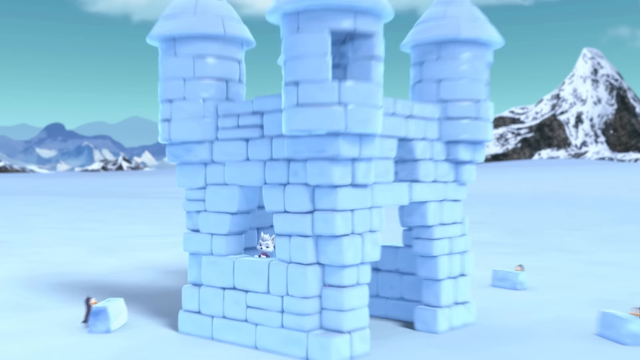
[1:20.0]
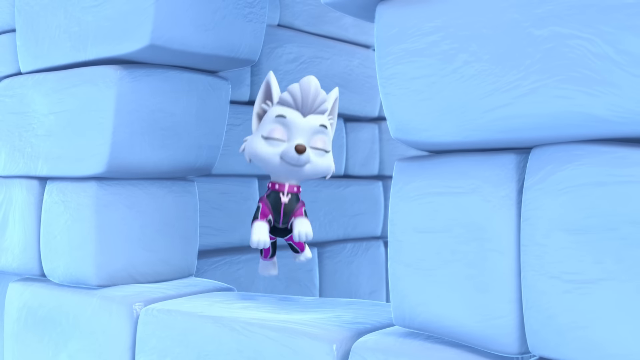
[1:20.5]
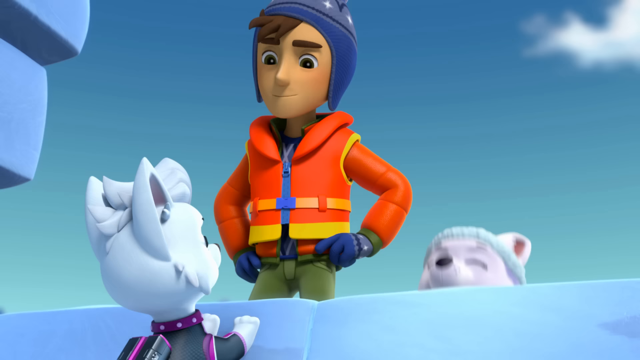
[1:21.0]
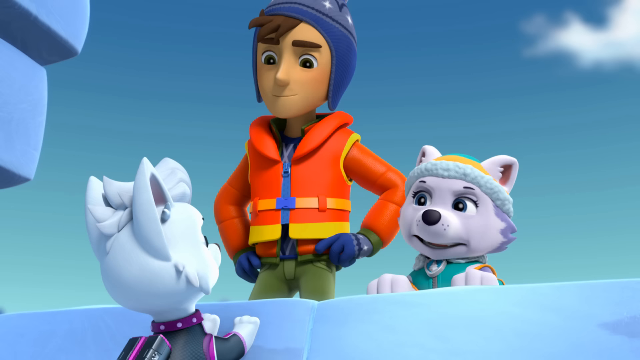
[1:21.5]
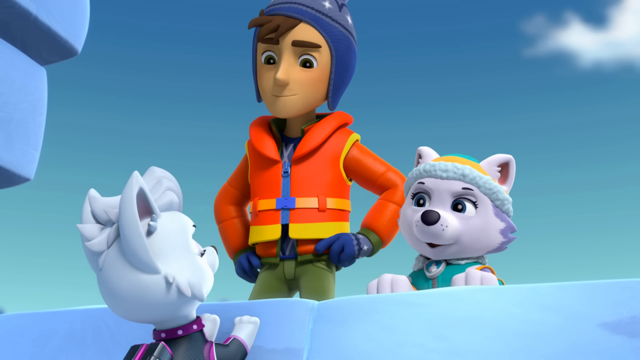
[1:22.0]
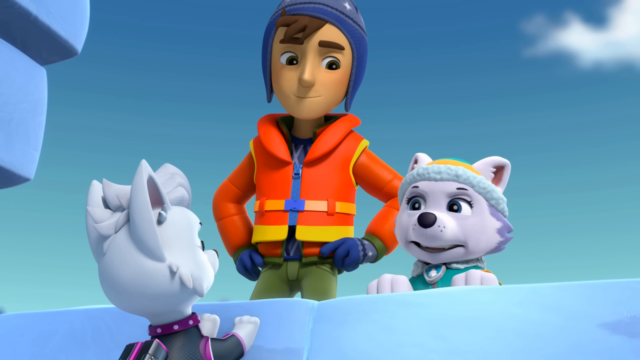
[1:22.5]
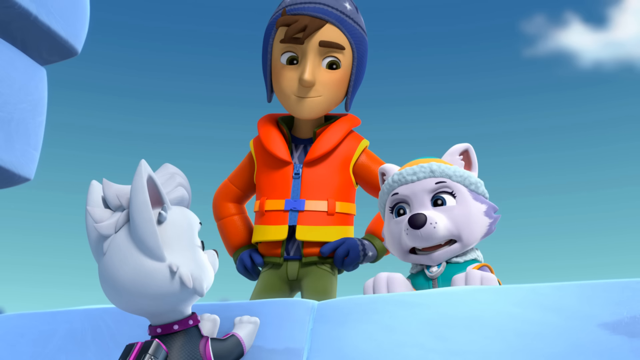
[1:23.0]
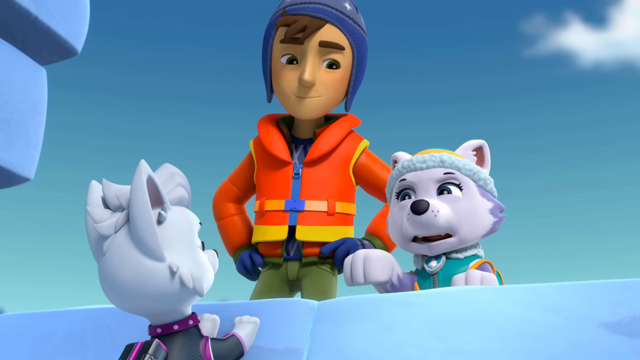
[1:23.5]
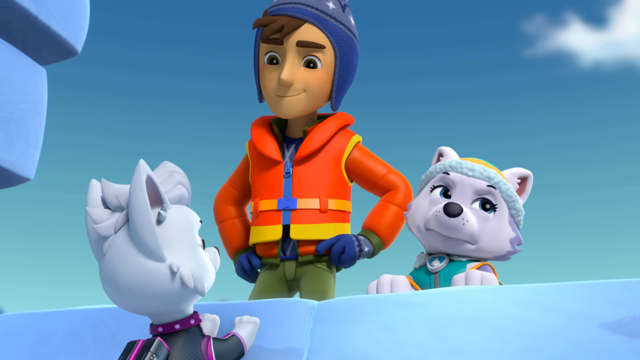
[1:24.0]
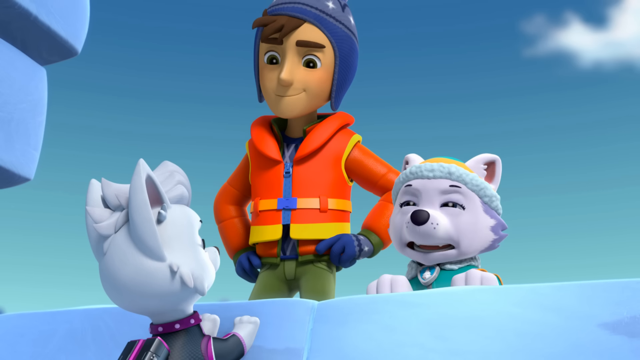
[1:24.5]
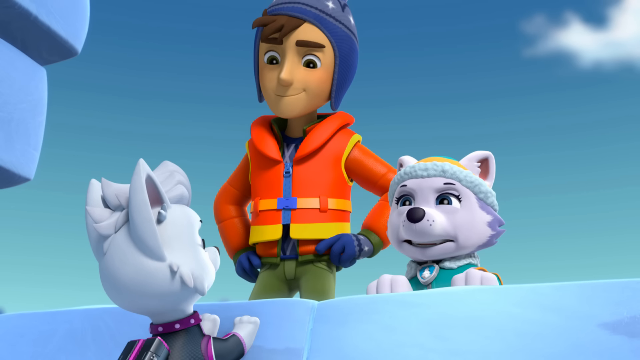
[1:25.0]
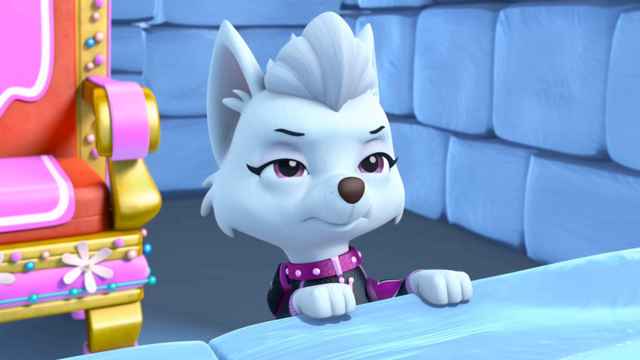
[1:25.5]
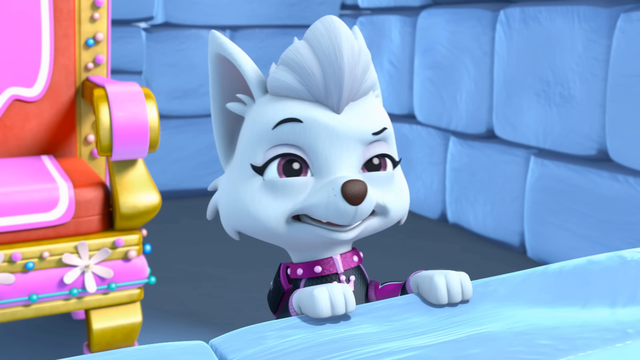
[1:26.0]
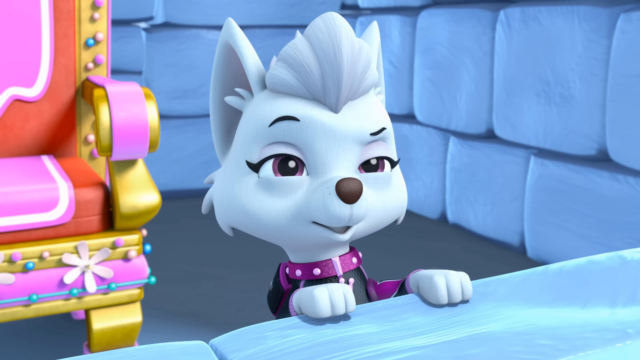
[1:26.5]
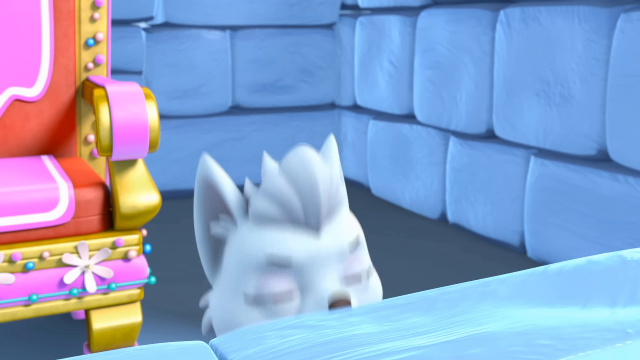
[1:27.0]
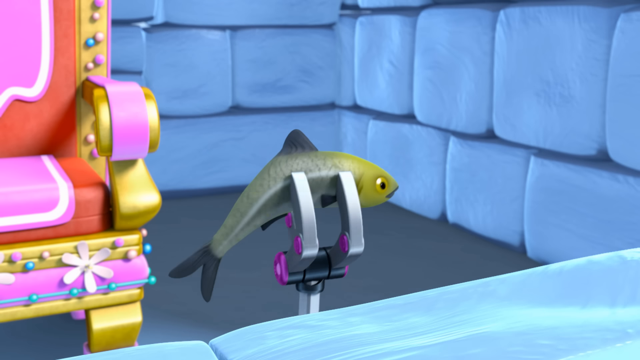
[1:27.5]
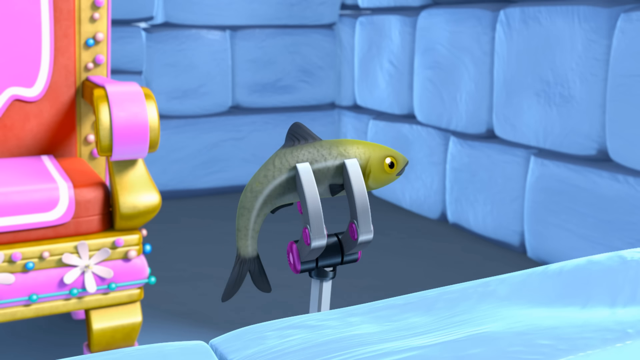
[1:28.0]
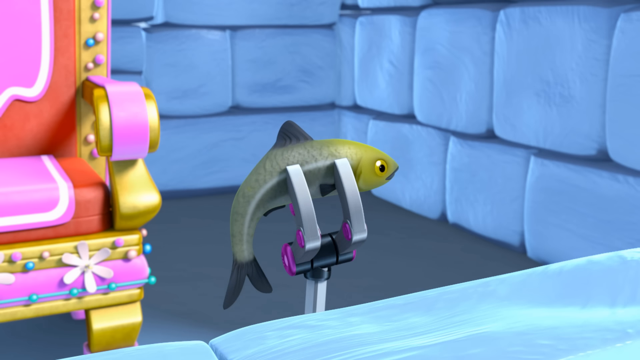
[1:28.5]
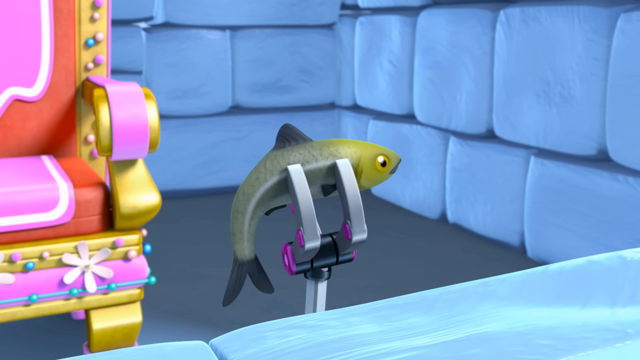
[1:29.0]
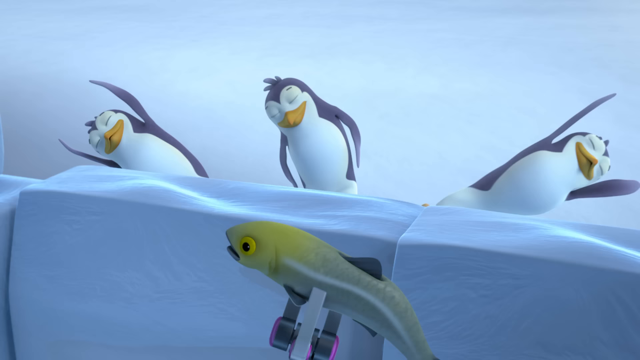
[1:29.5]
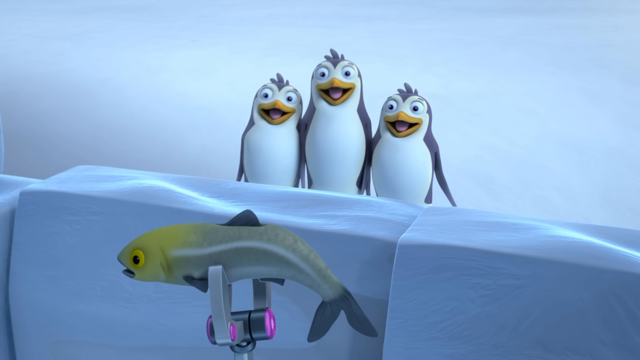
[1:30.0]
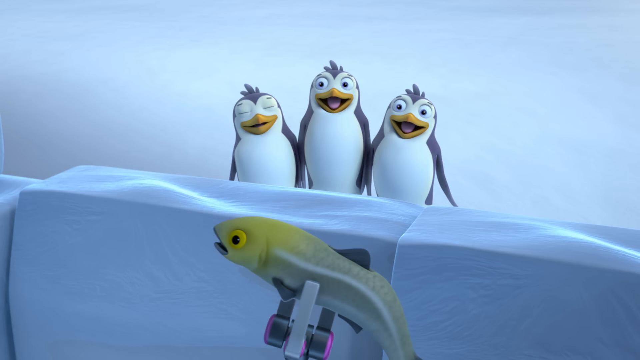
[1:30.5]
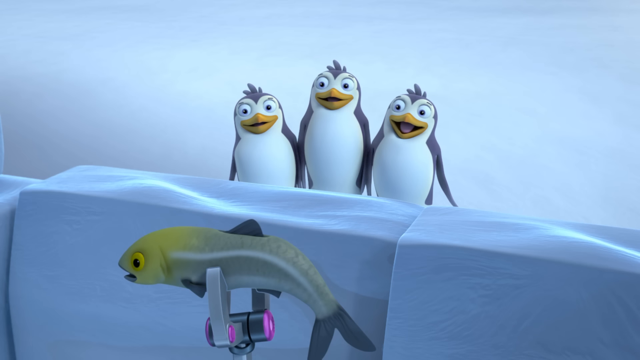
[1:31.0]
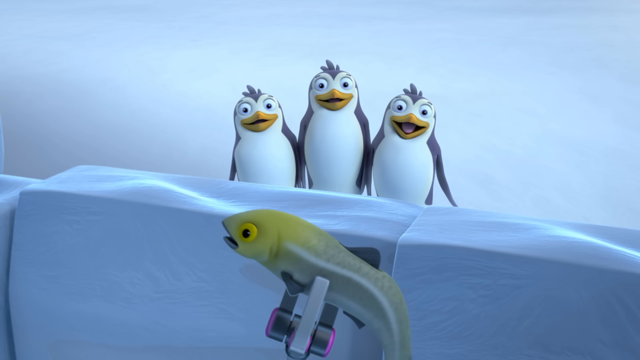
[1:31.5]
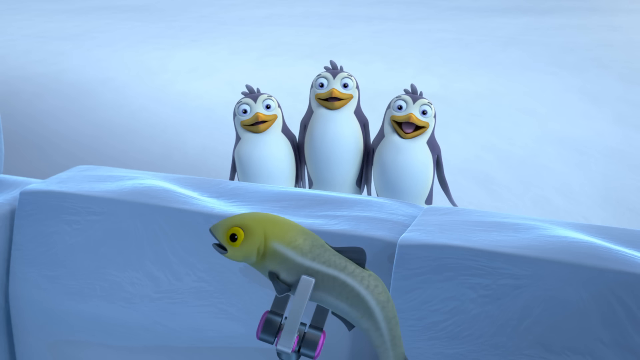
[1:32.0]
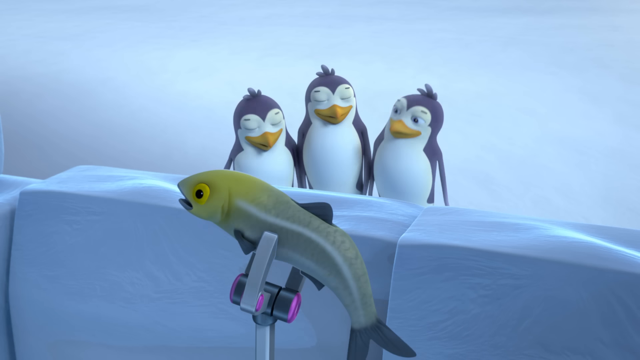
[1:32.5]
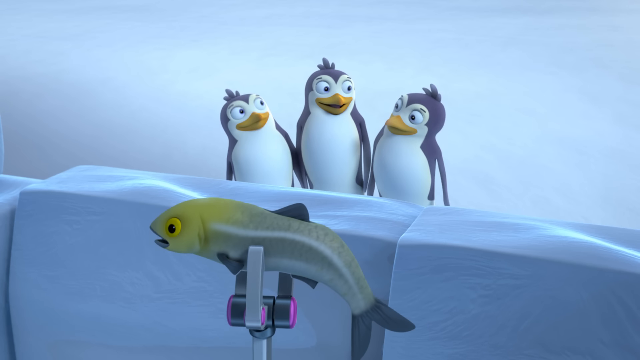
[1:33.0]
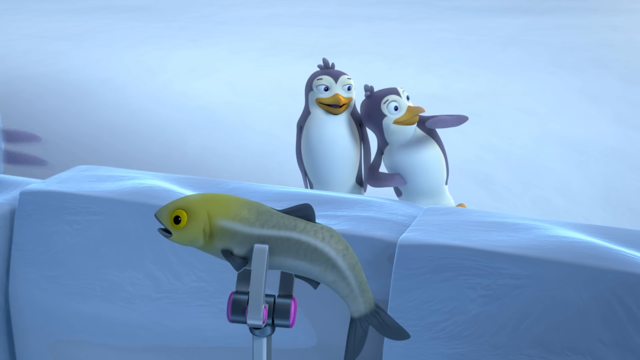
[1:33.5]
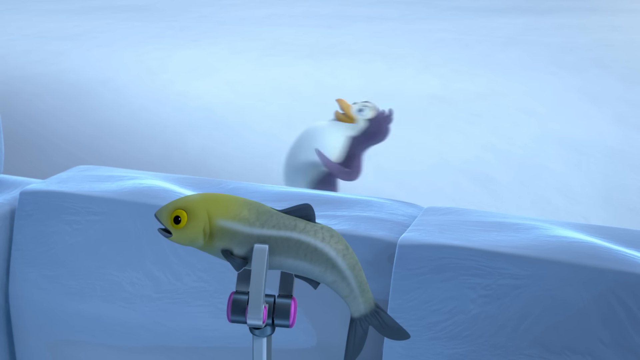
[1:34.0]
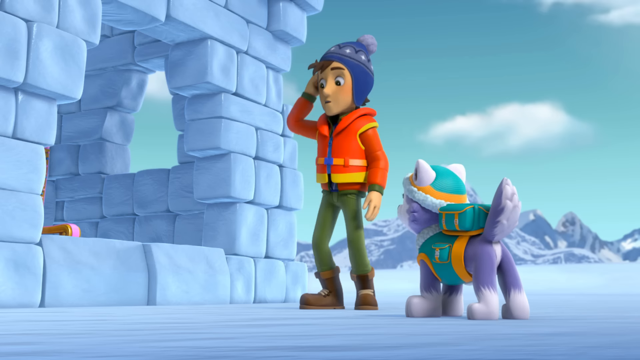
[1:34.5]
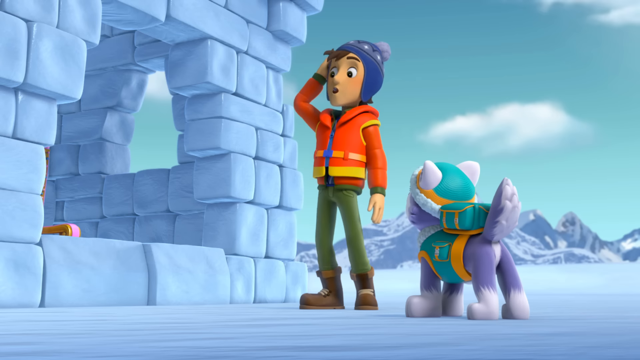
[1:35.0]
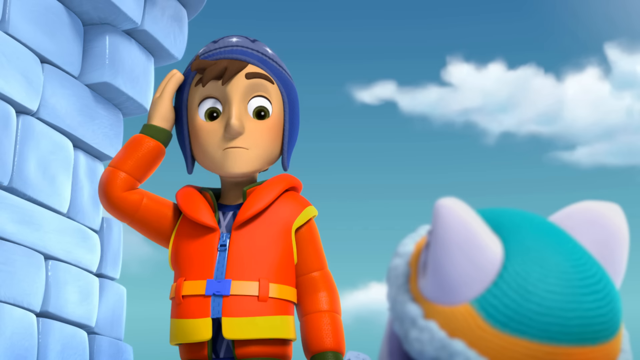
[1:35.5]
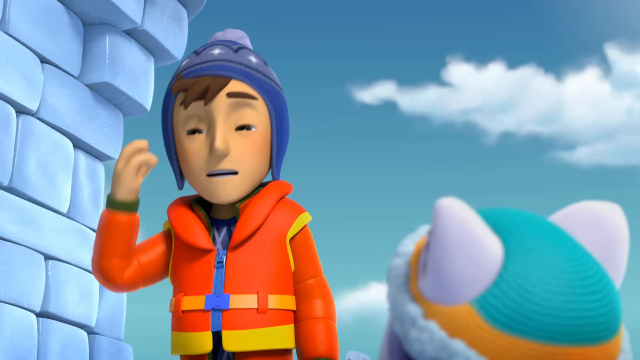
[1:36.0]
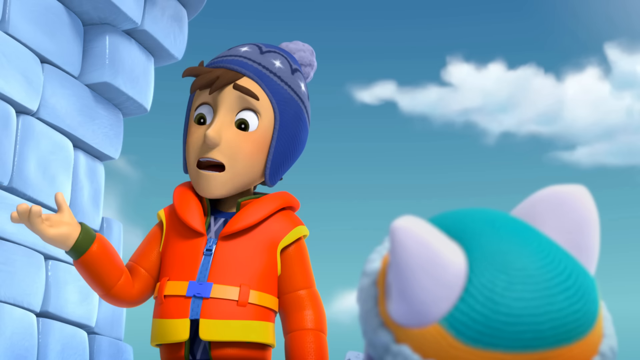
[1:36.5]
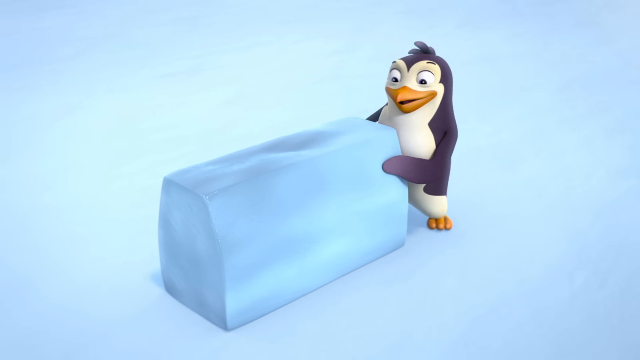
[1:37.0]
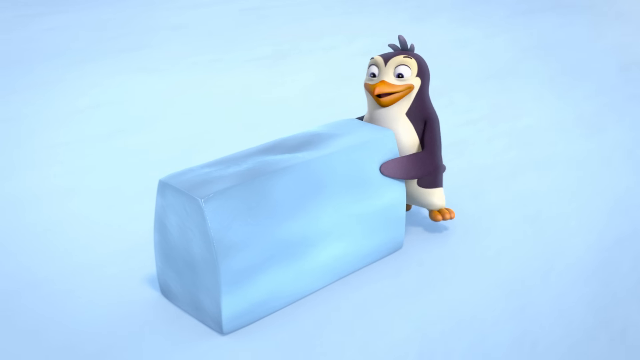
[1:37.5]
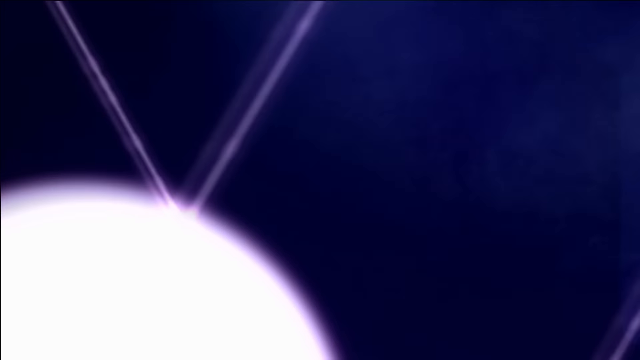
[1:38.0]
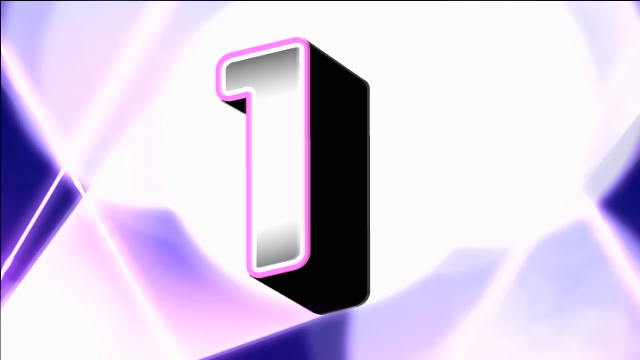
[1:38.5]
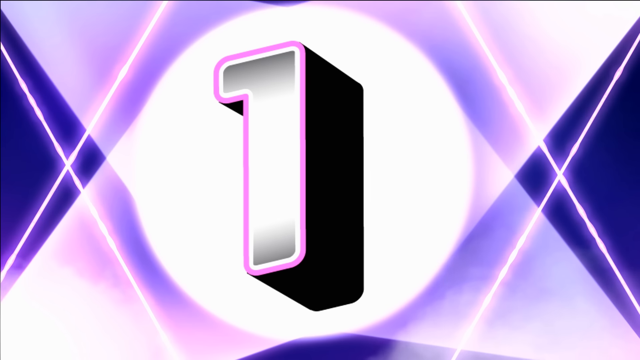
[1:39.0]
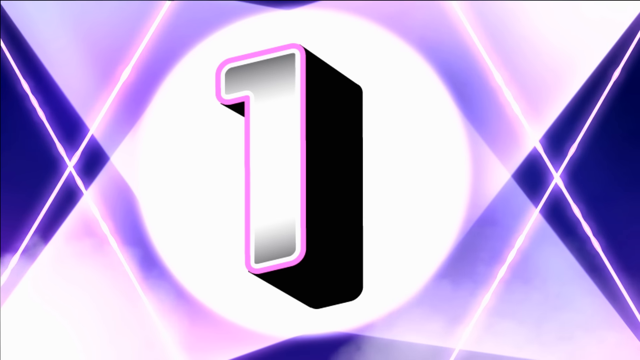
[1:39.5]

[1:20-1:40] The igloo-style castle has four turrets and is made of blocks of ice, in a snowy environment with mountains behind. The small white dog with the quiff is there, along with another white dog wearing a fluffy woolly hat, who has freckles around its nose. There is also a man wearing a blue helmet, a white jacket and an orange jacket that looks a bit like a life jacket, with a blue zip on the front, plus blue gloves and green trousers. The small dog with the woolly hat speaks to the other white dog. The white dog then holds up a fish, held up by a mechanical arm, and three black-and-white penguins with yellow beaks follow the fish. The man in the orange jacket and bobble hat looks a little confused, and he watches a penguin pushing a block of ice. A large number one is then shown, illuminated by spotlights and searchlights.